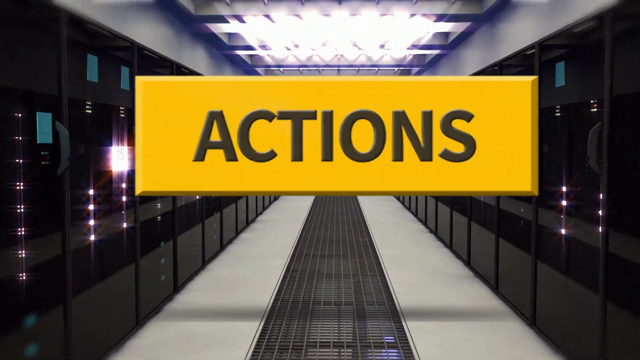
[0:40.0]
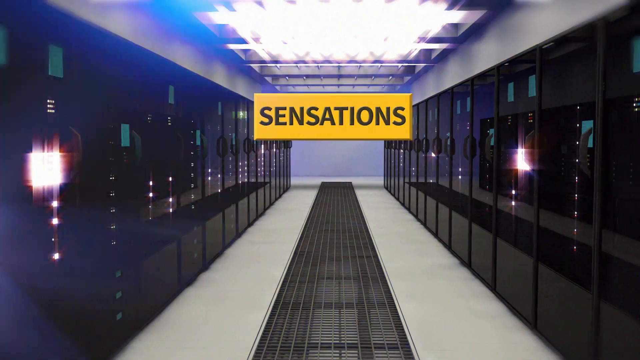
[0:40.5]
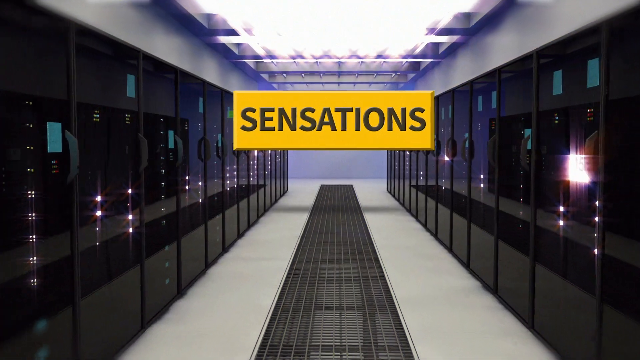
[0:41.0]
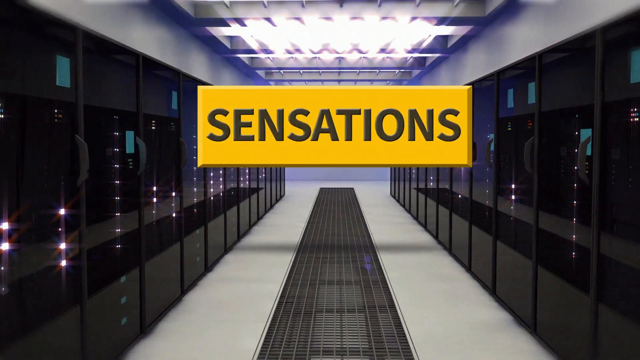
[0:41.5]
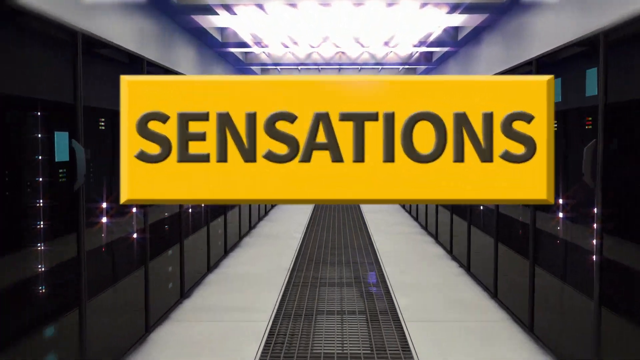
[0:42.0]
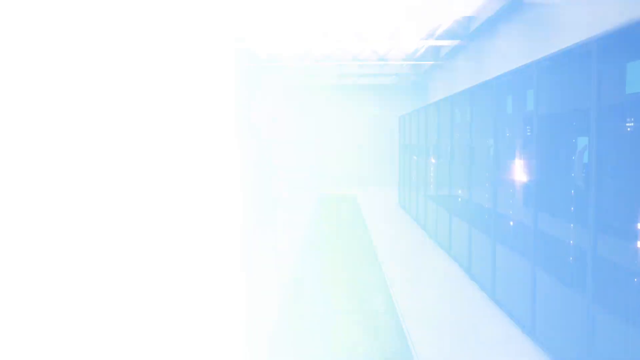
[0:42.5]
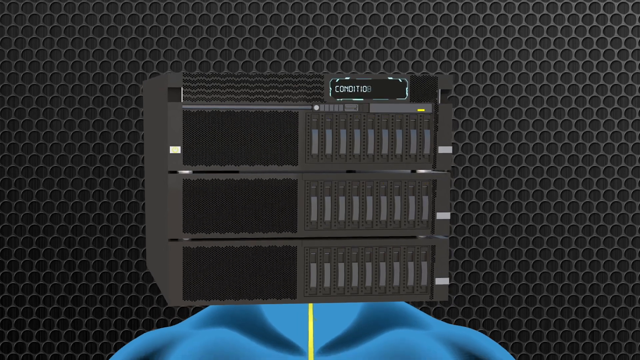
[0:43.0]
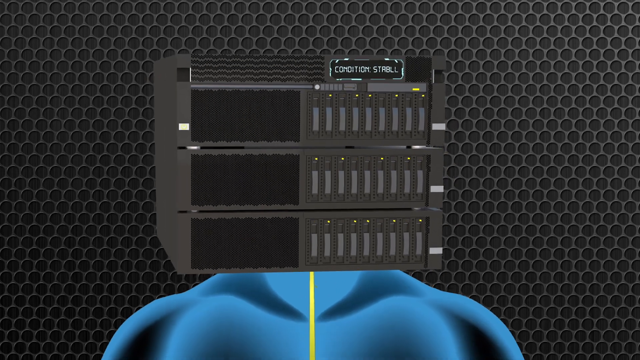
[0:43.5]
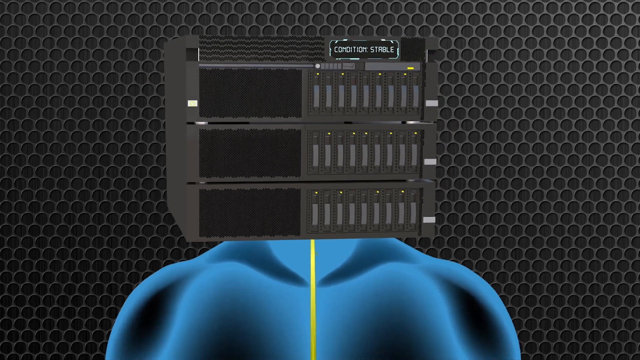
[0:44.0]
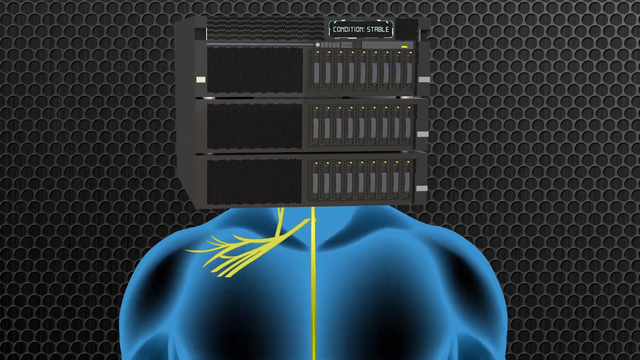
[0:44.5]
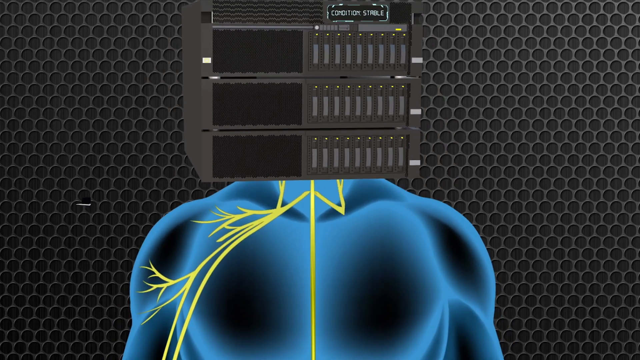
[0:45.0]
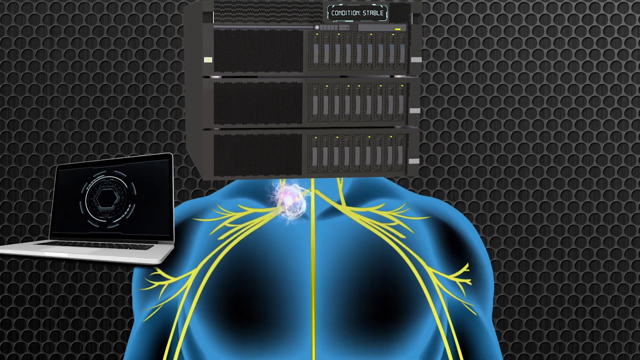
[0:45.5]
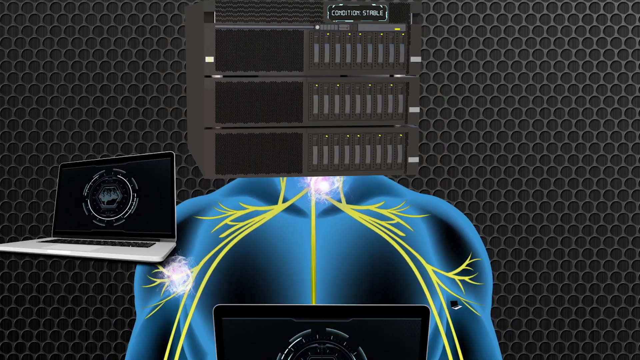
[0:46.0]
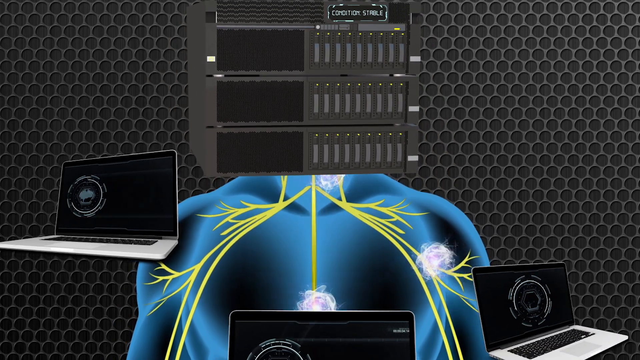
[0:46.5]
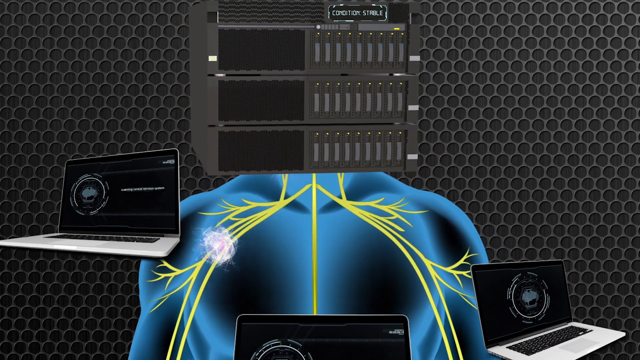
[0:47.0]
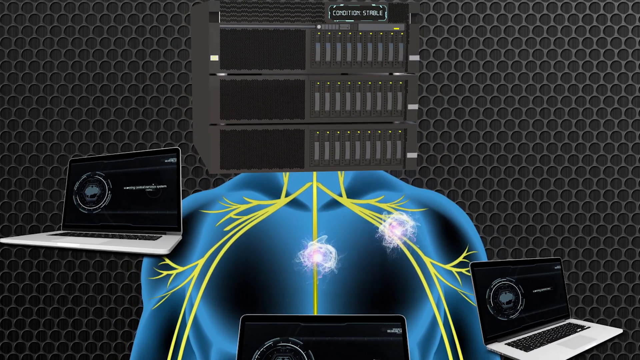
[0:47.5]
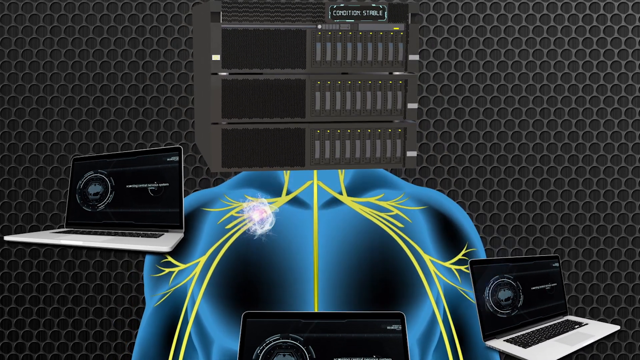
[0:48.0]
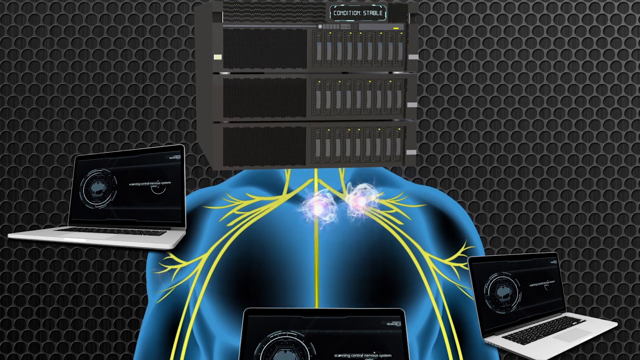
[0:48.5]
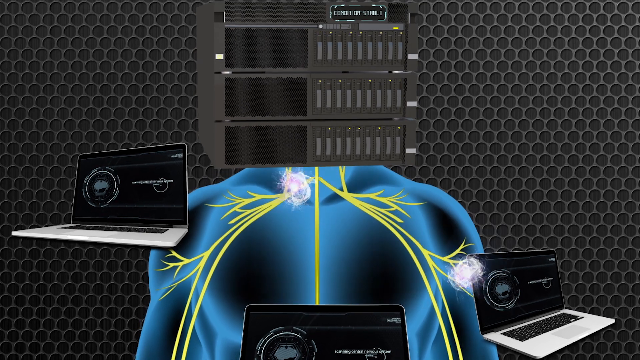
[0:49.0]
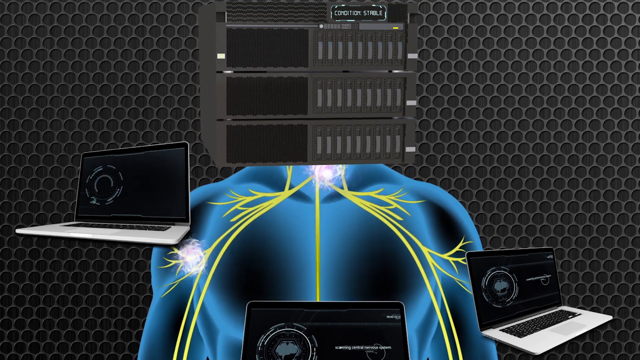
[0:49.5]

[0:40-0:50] After "actions", another word, "sensations", zooms in. A diagram shows a control center on the person's head with a laptop at the side, with the pain and nerve endings going through yellow veins. Another laptop appears in the bottom right corner, and everything flows to those two laptops. Toward the end, many purple sensations move through the body fairly quickly.